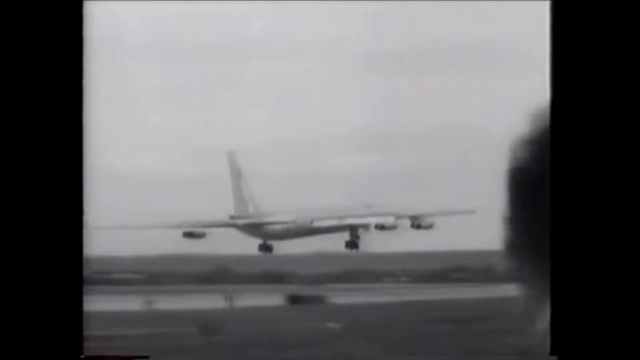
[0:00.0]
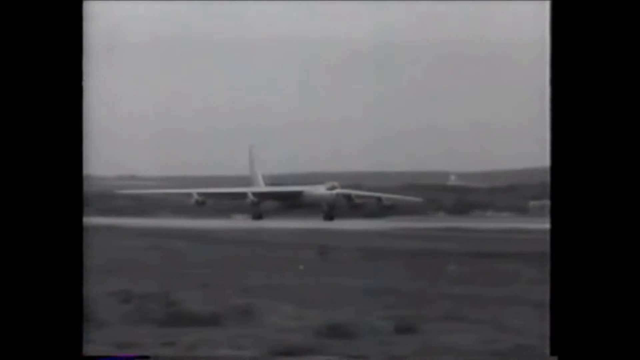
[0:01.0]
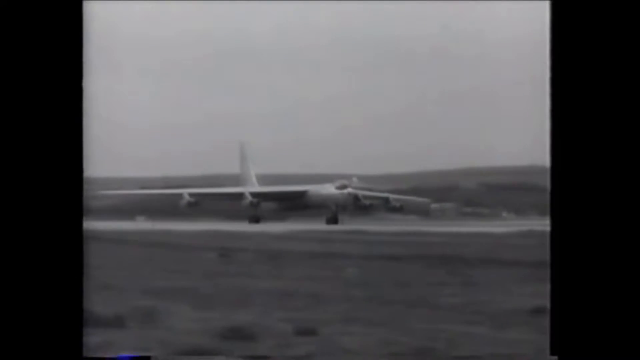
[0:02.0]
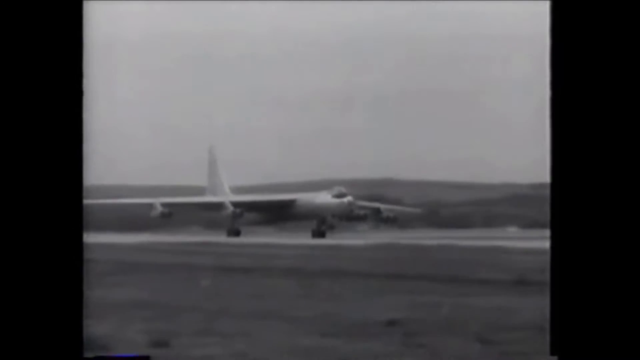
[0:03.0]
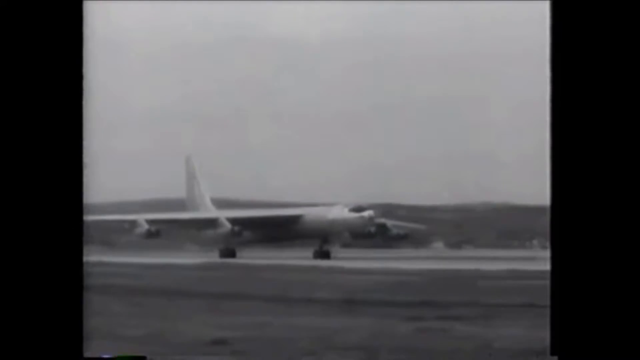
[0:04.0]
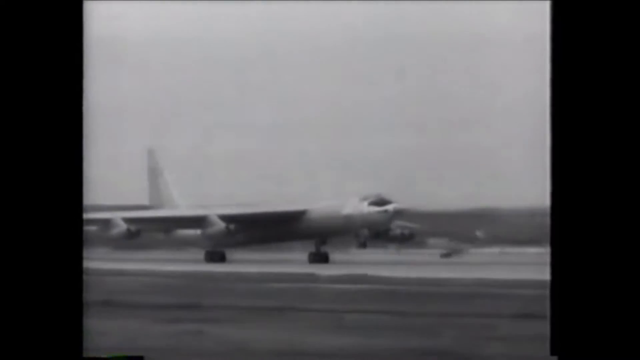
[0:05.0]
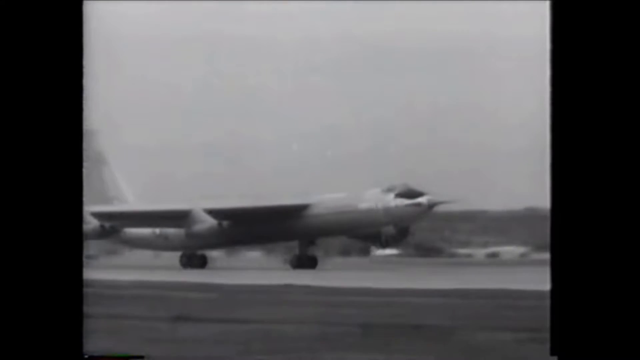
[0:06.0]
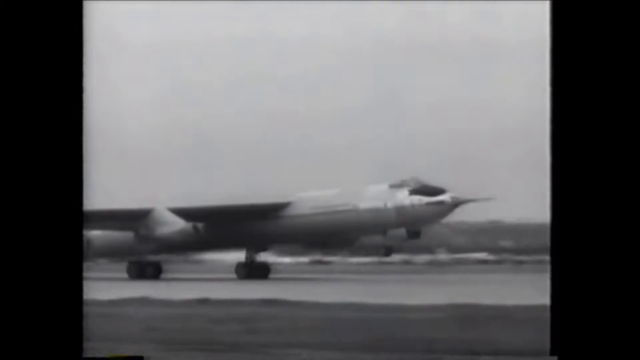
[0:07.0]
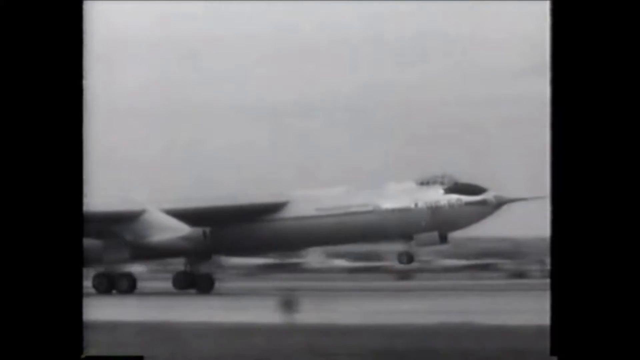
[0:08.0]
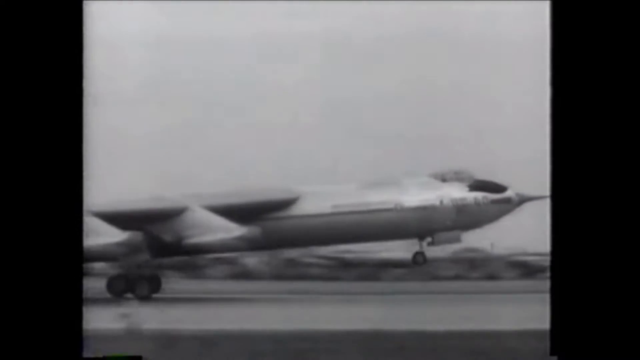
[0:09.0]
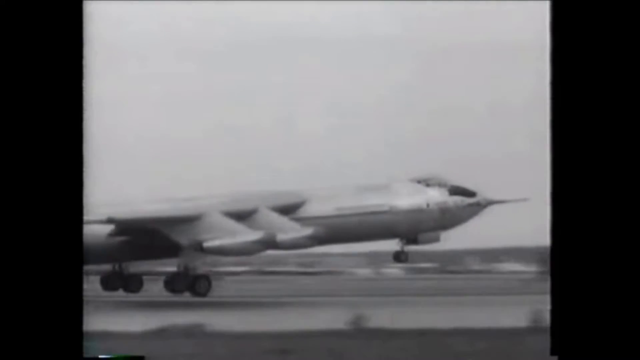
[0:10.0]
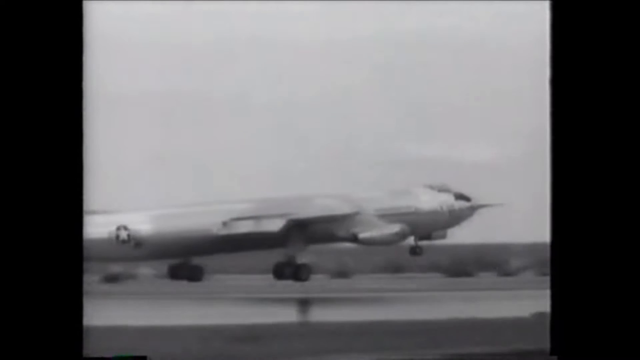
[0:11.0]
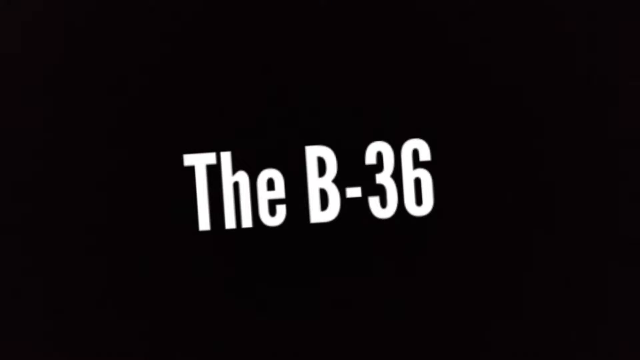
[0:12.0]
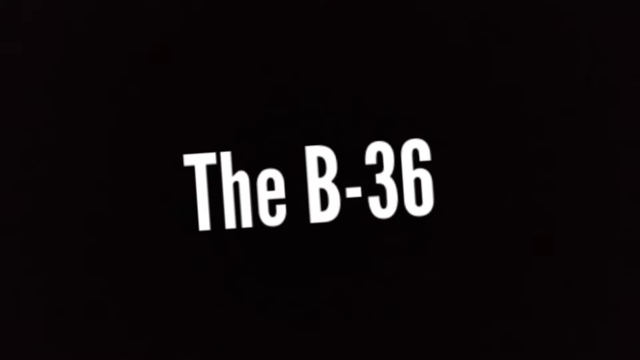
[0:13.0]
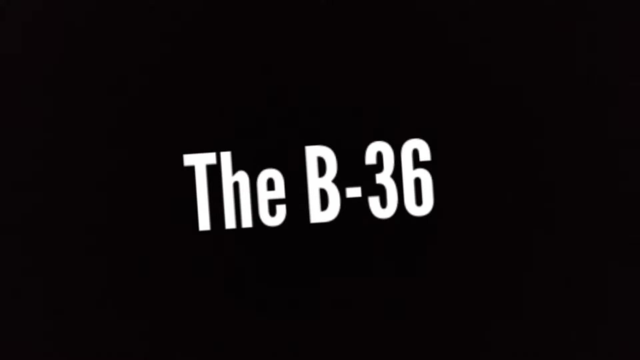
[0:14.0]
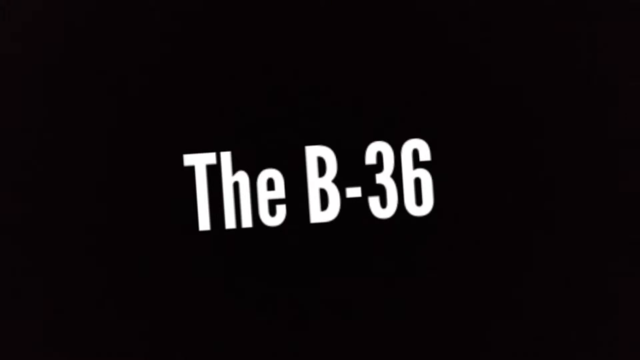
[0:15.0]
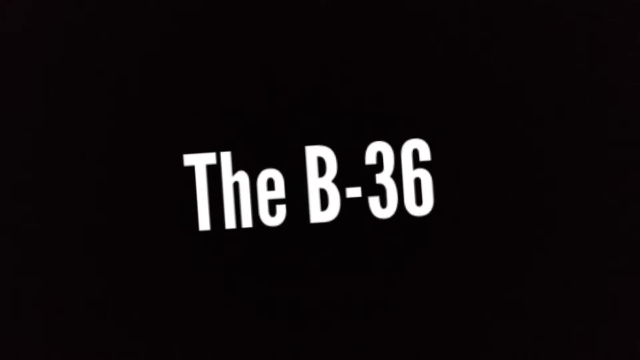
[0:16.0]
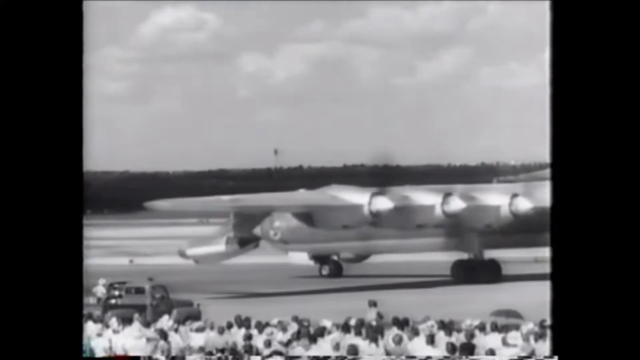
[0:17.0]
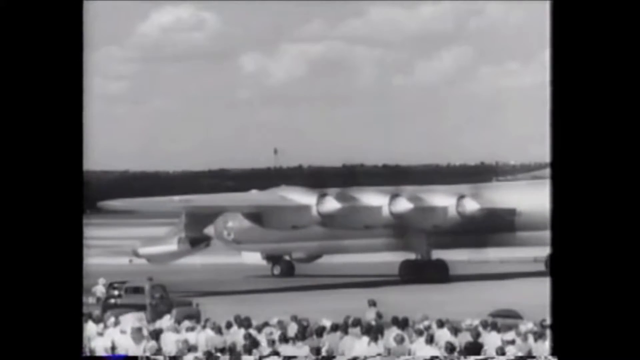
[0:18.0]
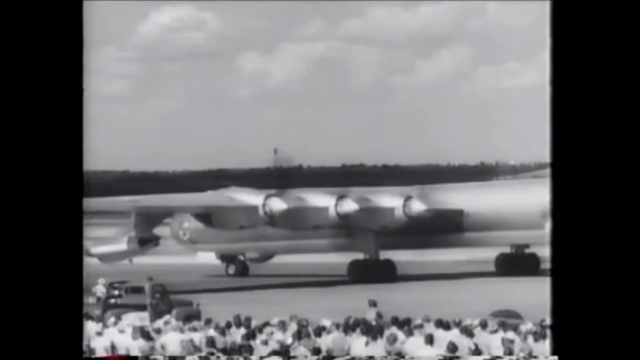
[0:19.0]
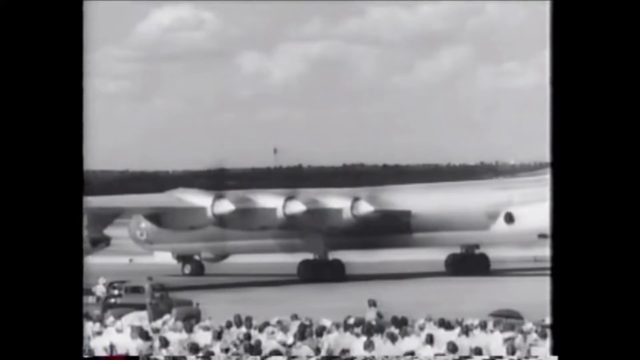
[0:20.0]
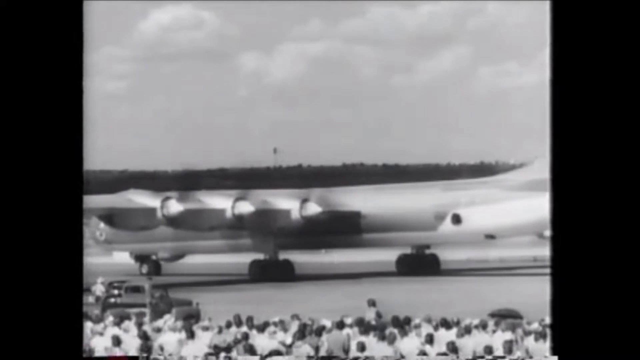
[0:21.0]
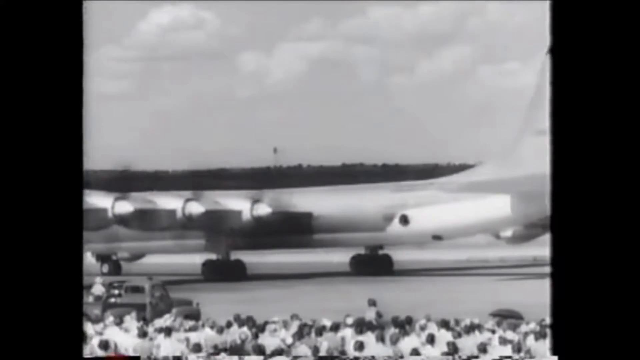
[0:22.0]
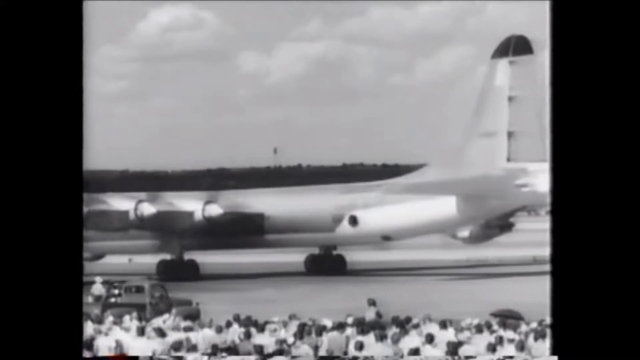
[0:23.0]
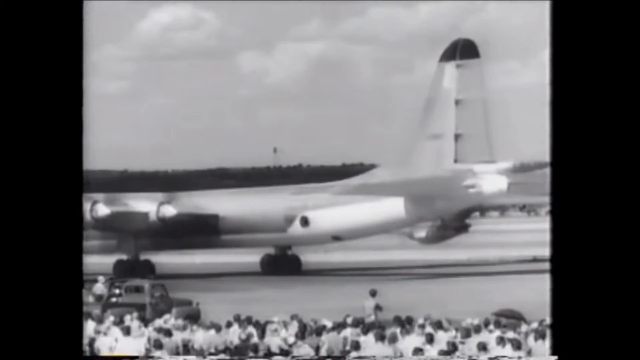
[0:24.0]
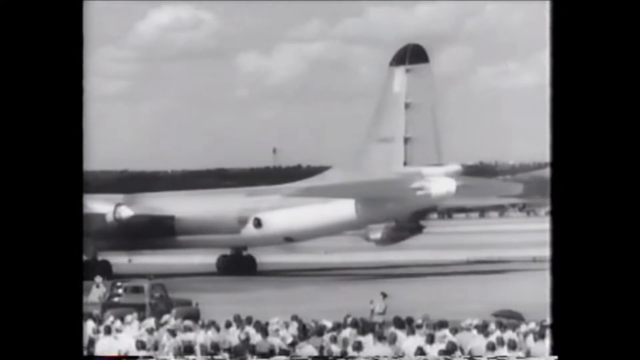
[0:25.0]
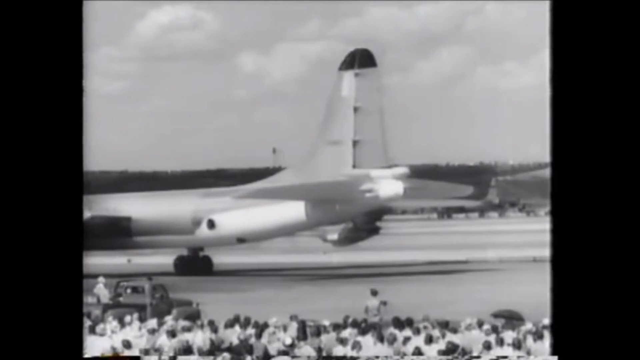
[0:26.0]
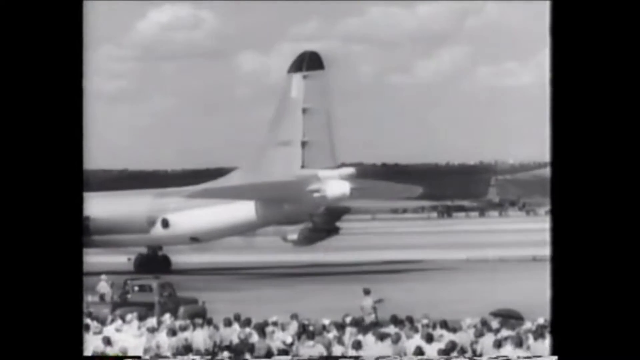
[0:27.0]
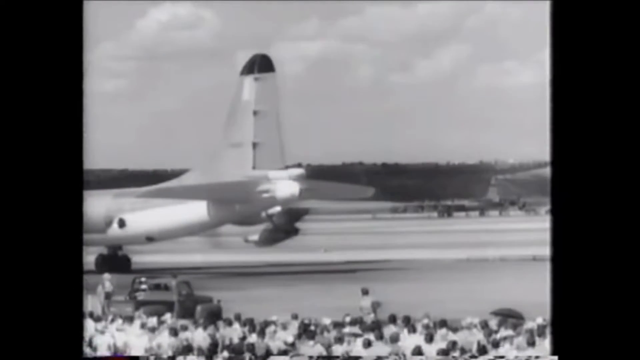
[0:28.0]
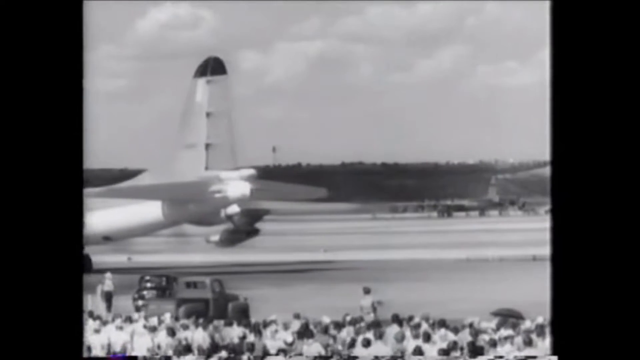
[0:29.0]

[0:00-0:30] This black-and-white film shows a B-36 bomber taxiing on a runway. It opens with a wide view of the bomber taxiing, then pans away to show the full length of the aircraft as it ascends. A title screen reads "the B-36", the name of the aircraft. Another scene shows the aircraft landing in slow motion in front of a crowd of people on the sidelines watching it return to the ground. The footage appears dated, possibly from the late 1950s or early 1960s, and the resolution is low, though the action is still discernible. A few vehicles are on the runway, including an old-time flatbed truck and some sort of 1950s-style sedan.